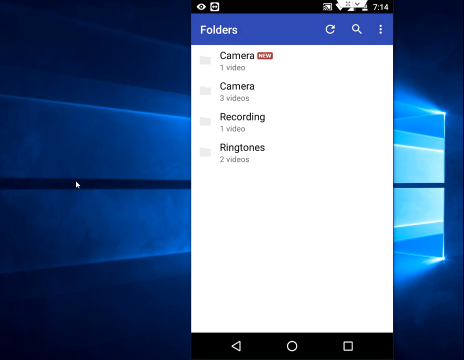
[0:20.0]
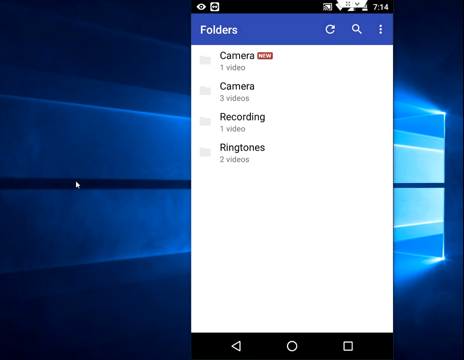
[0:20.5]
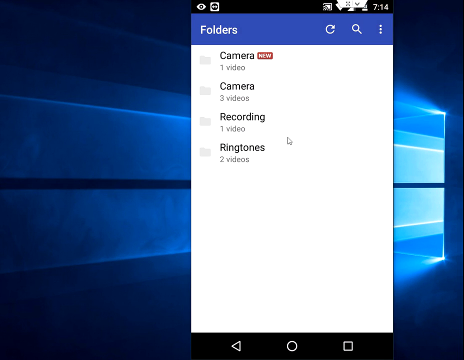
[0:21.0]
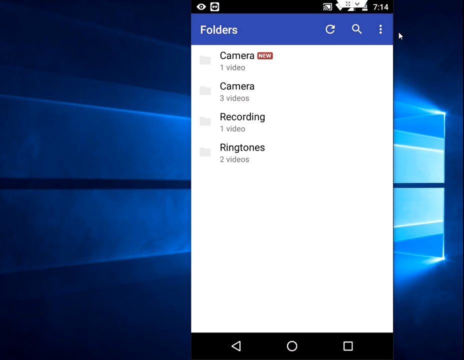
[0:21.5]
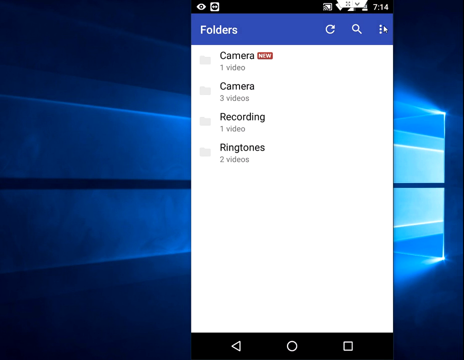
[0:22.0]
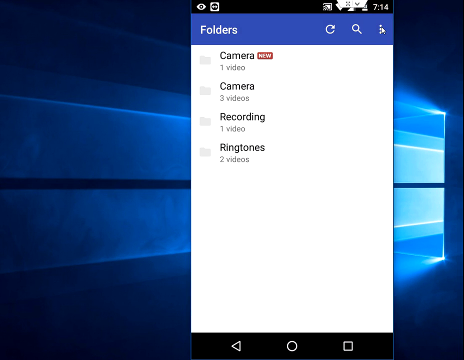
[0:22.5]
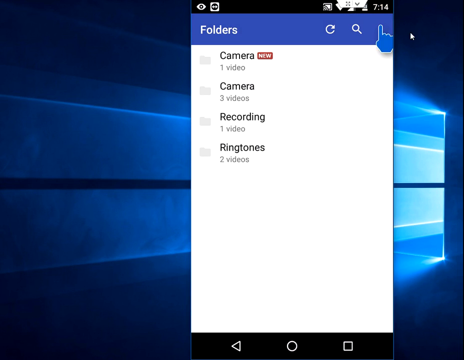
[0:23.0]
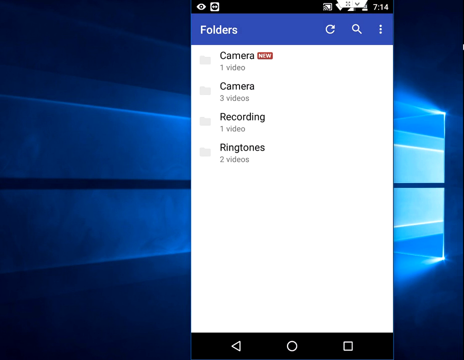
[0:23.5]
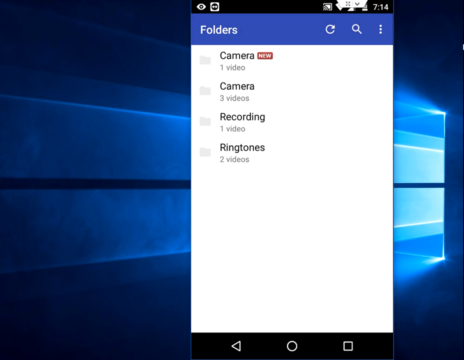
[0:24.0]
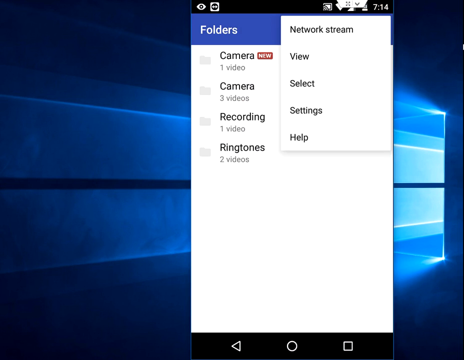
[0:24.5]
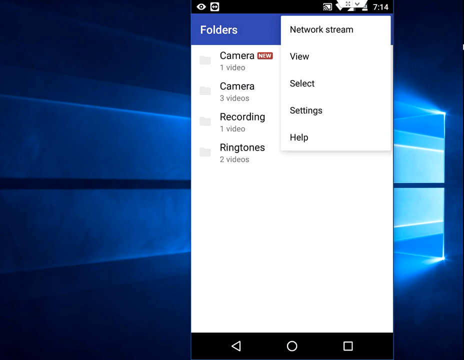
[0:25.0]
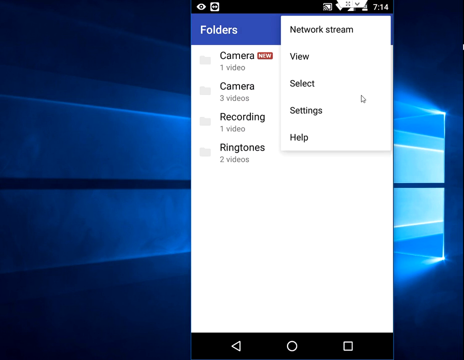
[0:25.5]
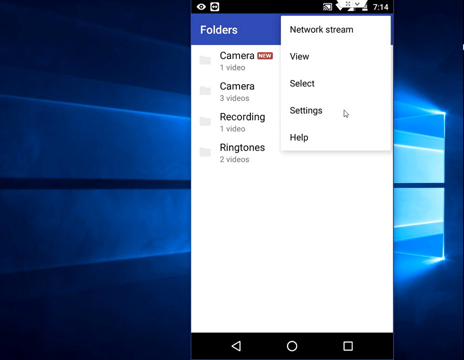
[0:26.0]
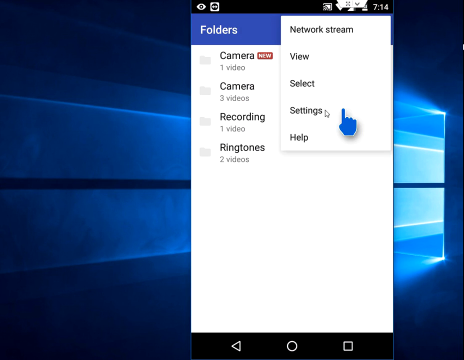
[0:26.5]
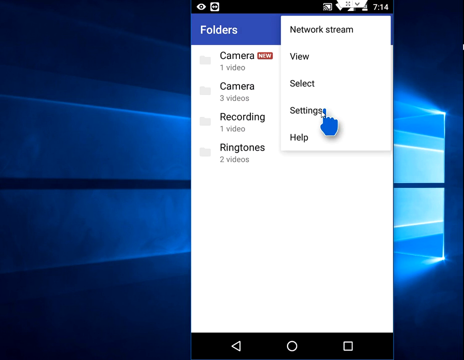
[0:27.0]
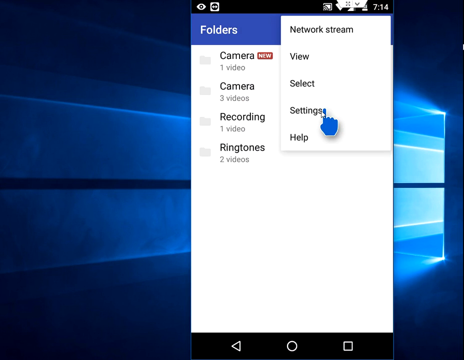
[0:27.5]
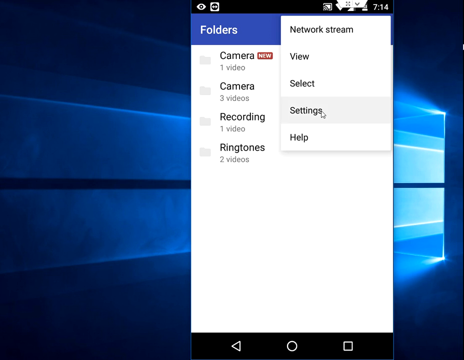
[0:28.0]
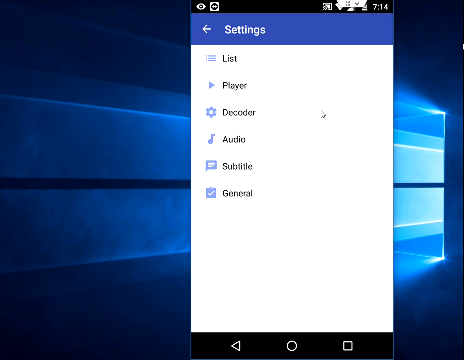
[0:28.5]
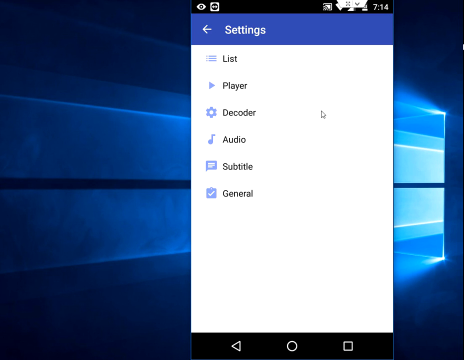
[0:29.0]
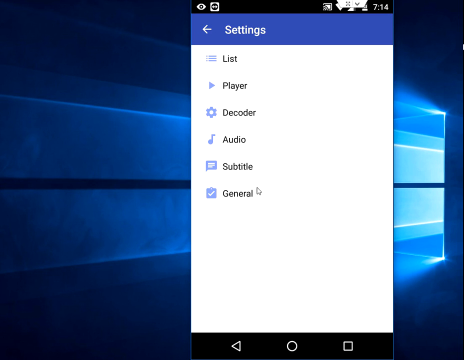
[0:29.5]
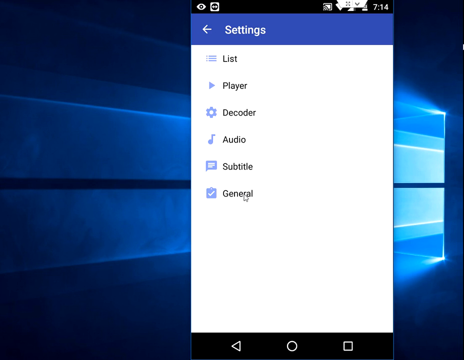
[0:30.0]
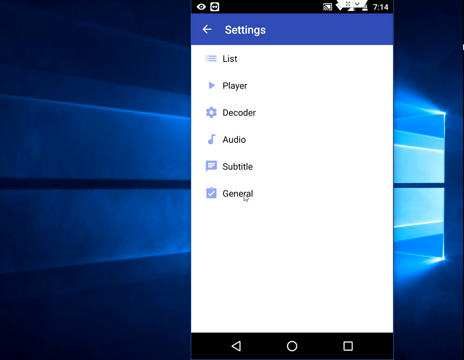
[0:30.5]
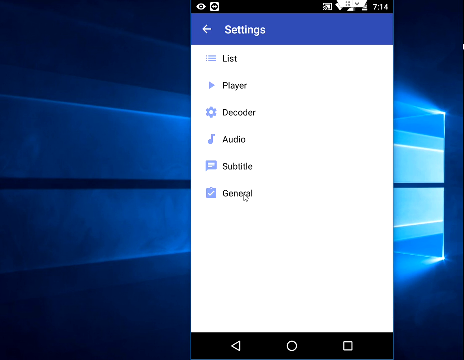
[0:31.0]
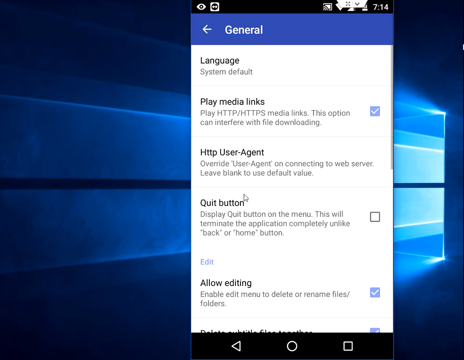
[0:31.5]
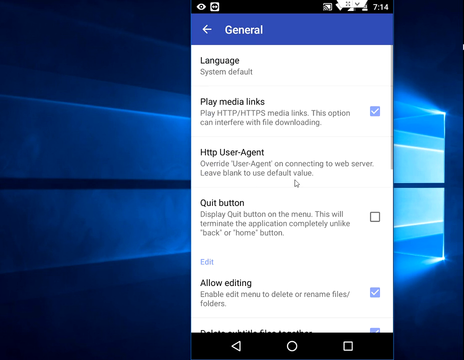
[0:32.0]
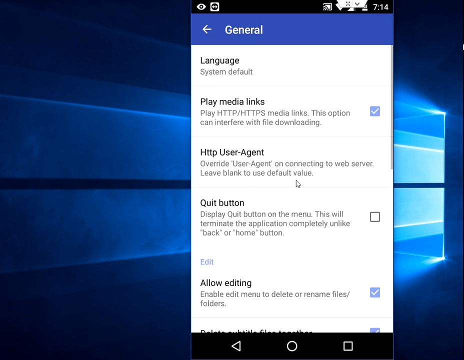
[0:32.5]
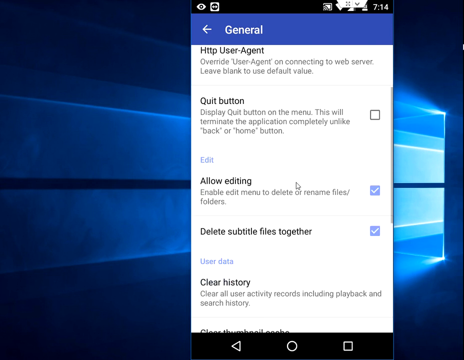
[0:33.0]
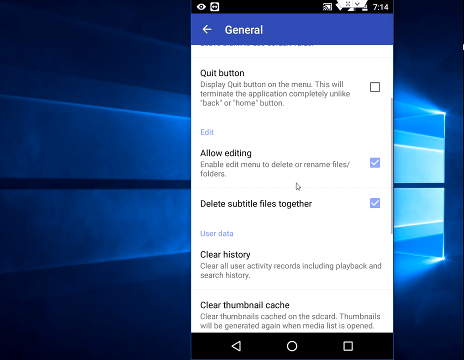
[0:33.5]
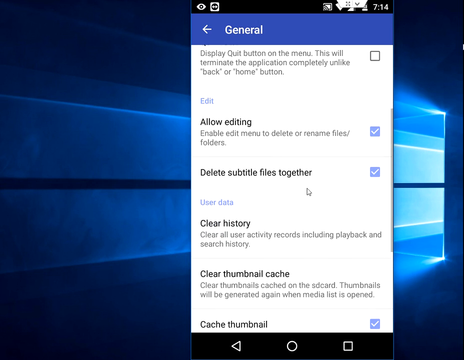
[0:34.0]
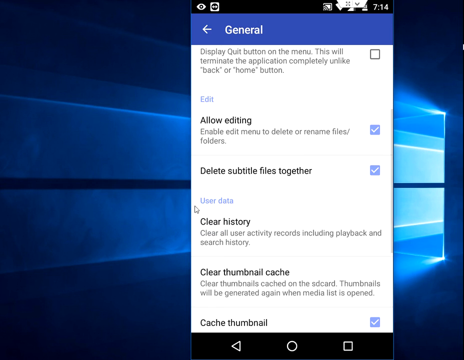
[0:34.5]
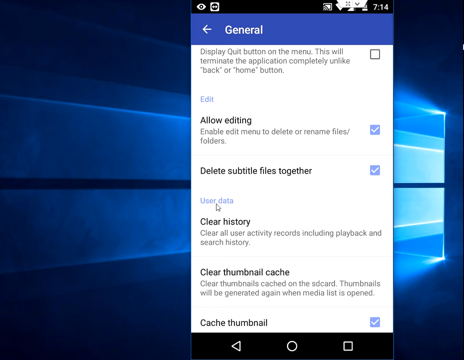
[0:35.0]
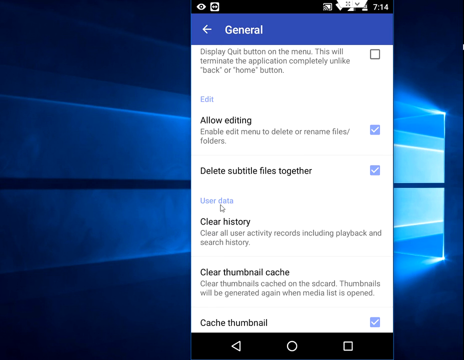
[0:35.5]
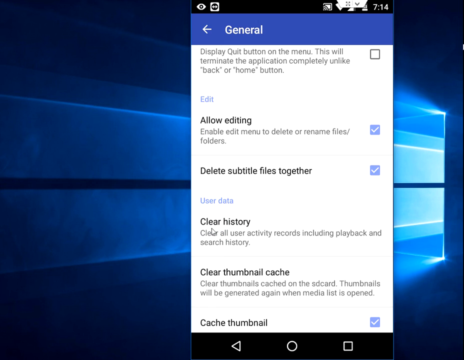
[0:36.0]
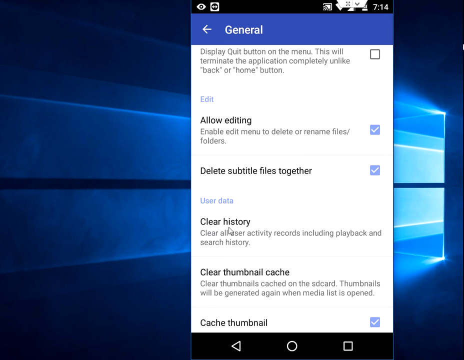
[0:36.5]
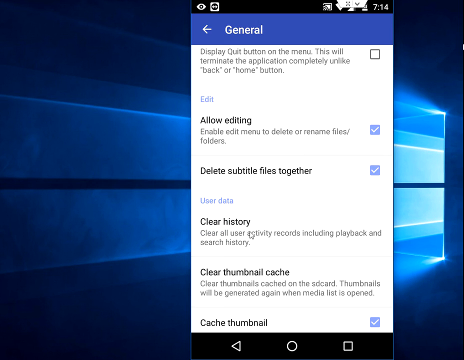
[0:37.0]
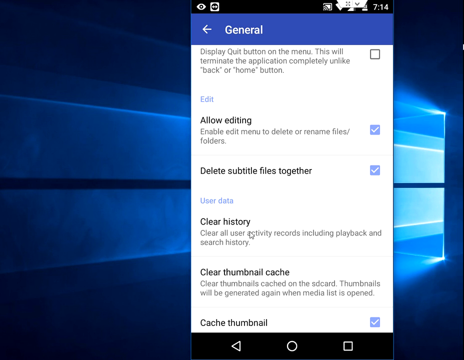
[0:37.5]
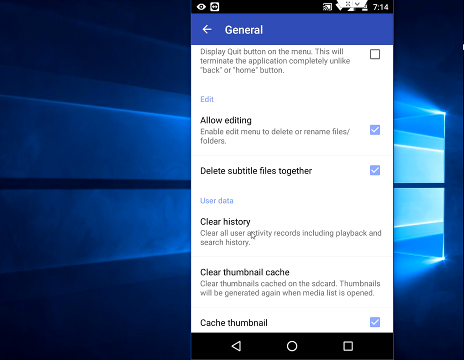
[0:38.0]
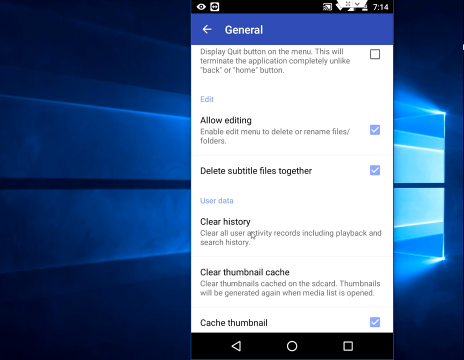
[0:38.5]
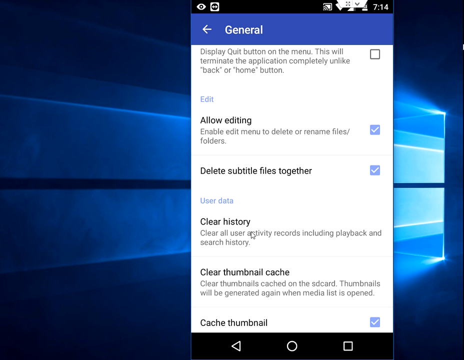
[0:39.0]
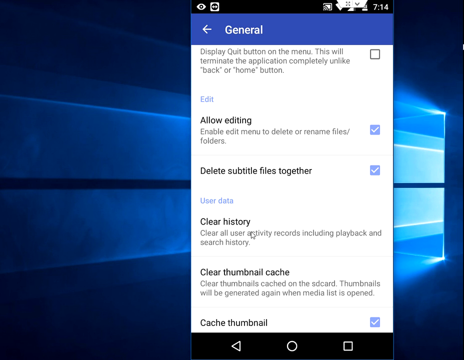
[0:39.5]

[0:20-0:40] The phone screen, which appears to be a virtual phone screen or possibly one cast onto a monitor, is overlaid on a blue graphic background. It is in the folders view: at the top, "folders" is written in white text on a blue background, with options for search and refresh. Below that is "camera," with "new" next to it and "one video" below it; then "camera" again with "three videos" below; "recording" with "one video" below; and "ringtones" with "two videos" below. The person appears to be selecting options, and a menu opens at the top right with the options "network stream," "view," "select," "settings," and lastly "help." As they apparently move around selecting things, a small blue hand with its index finger out pops up on the screen. Next comes a settings screen listing, from top to bottom, "list," "player," "decoder," "audio," "subtitle," and "general."